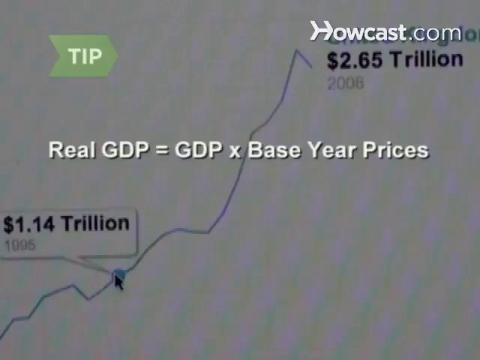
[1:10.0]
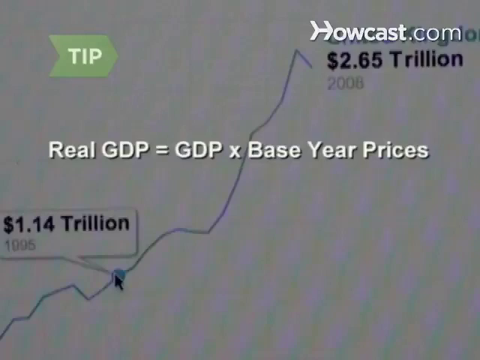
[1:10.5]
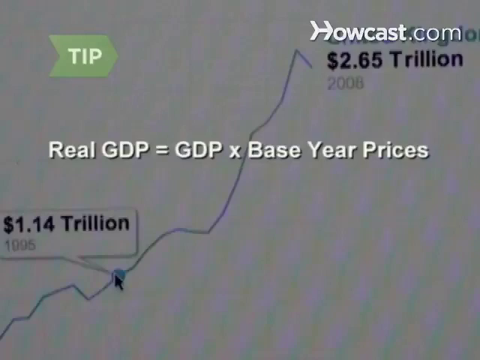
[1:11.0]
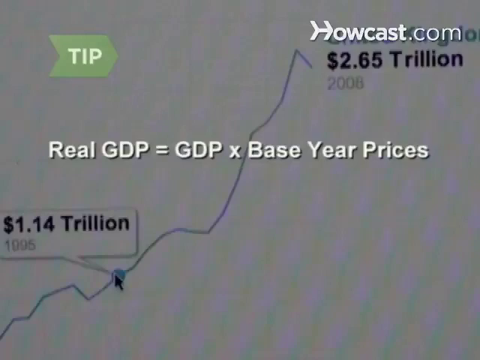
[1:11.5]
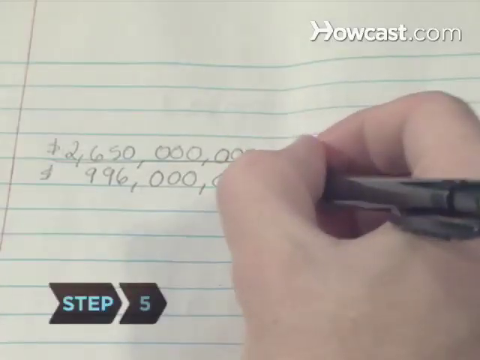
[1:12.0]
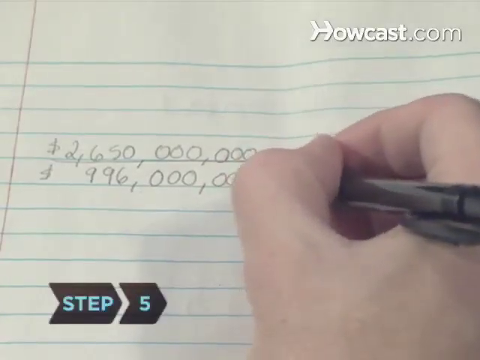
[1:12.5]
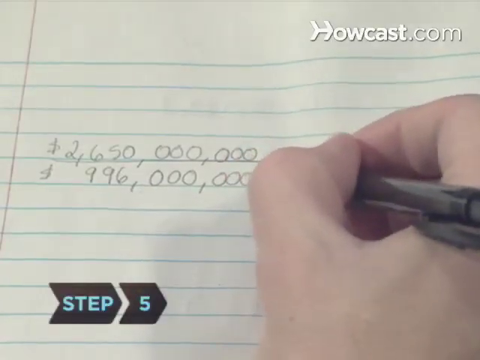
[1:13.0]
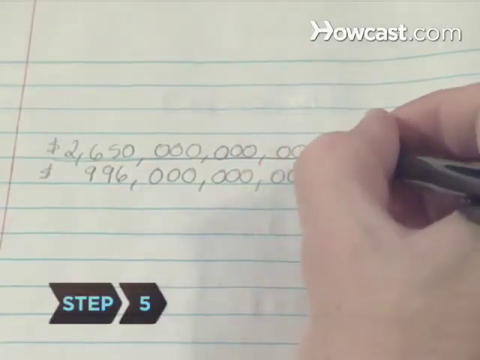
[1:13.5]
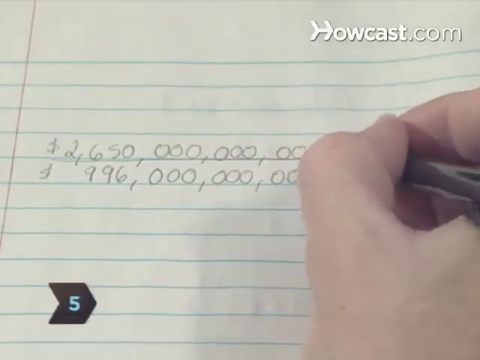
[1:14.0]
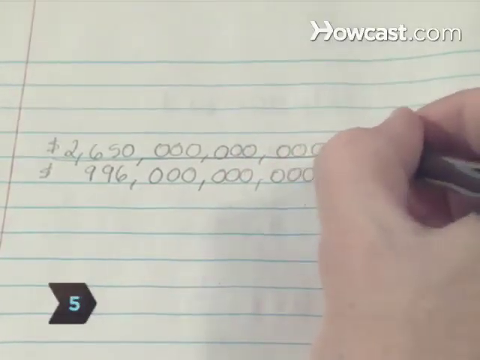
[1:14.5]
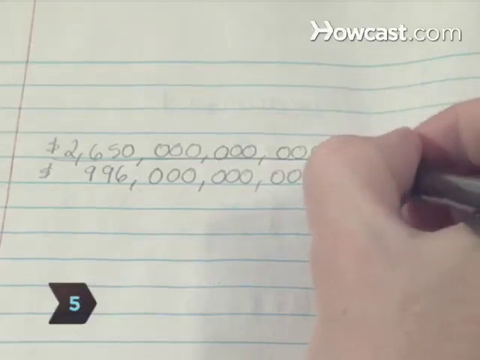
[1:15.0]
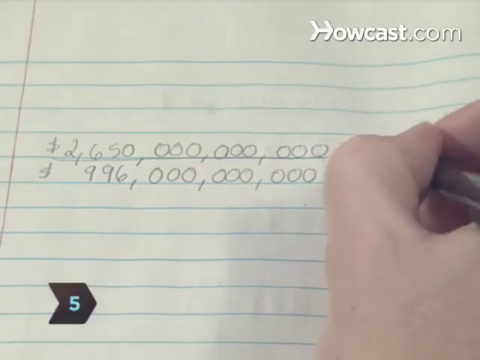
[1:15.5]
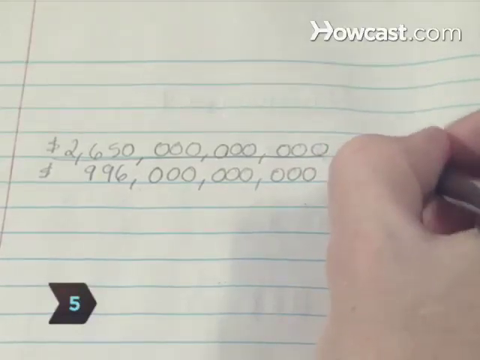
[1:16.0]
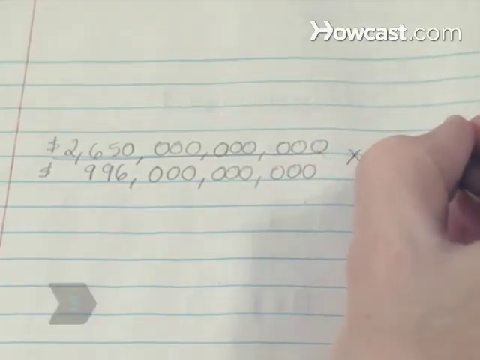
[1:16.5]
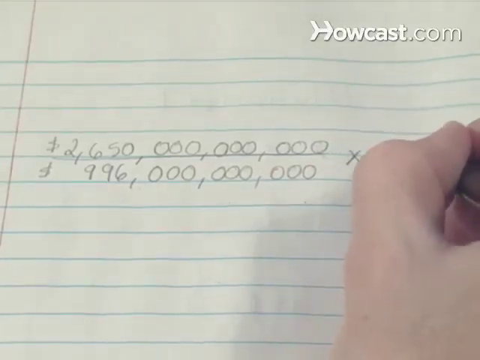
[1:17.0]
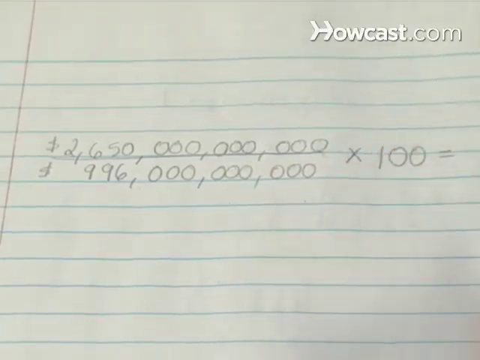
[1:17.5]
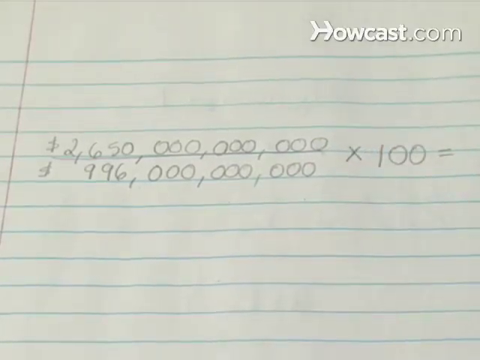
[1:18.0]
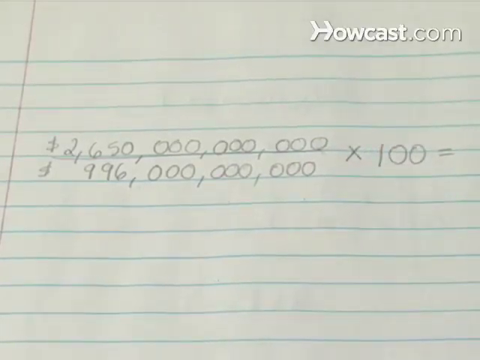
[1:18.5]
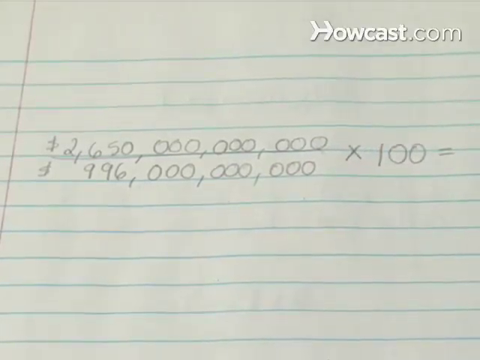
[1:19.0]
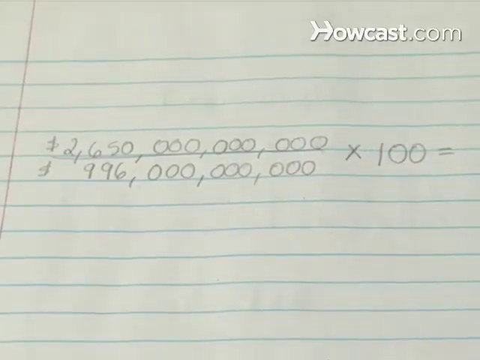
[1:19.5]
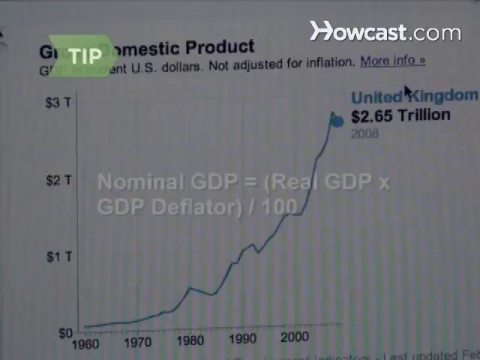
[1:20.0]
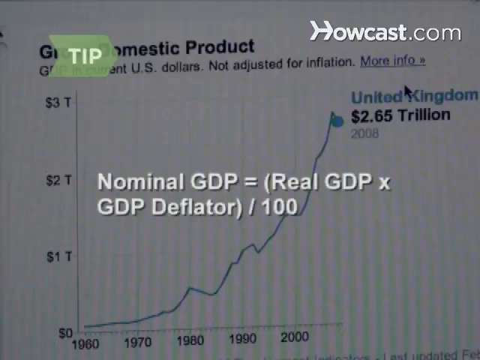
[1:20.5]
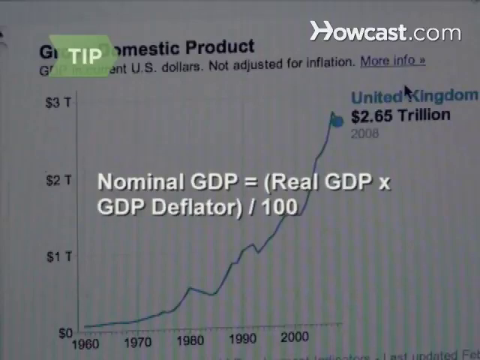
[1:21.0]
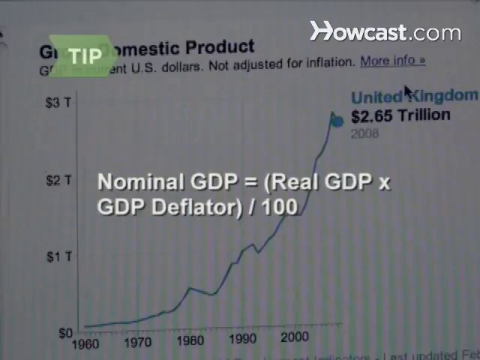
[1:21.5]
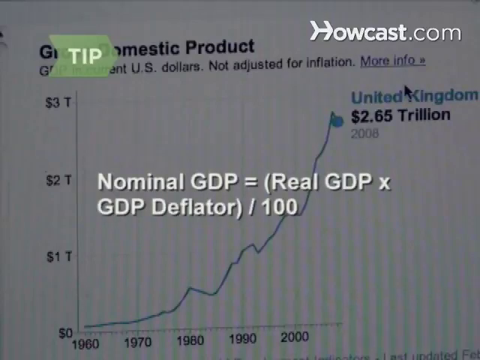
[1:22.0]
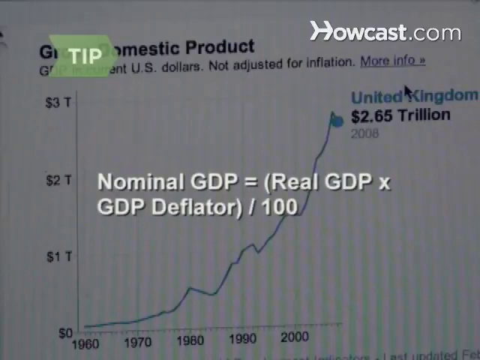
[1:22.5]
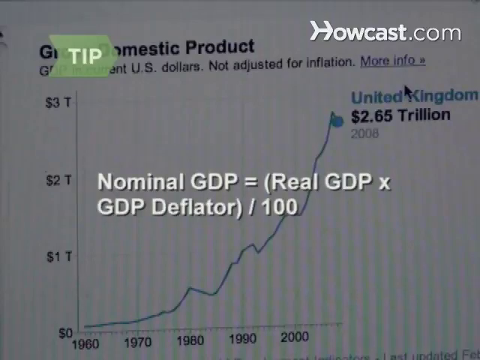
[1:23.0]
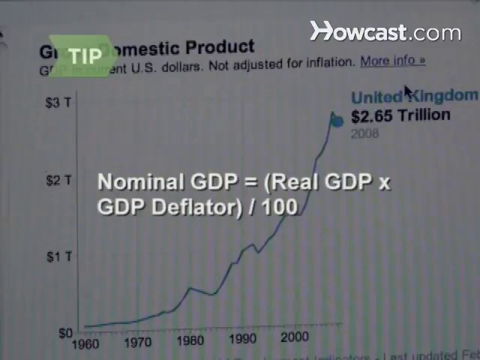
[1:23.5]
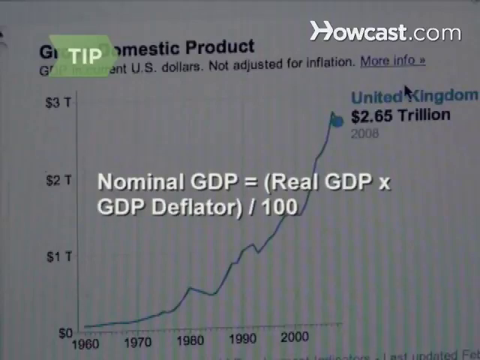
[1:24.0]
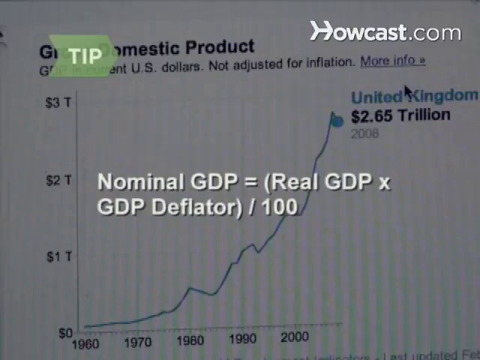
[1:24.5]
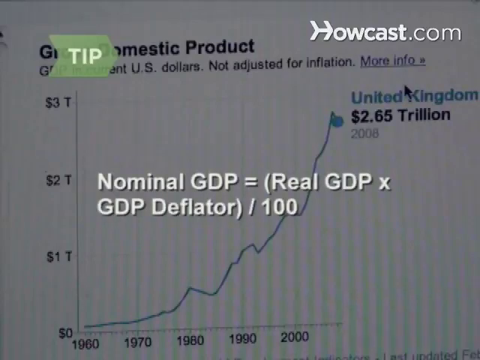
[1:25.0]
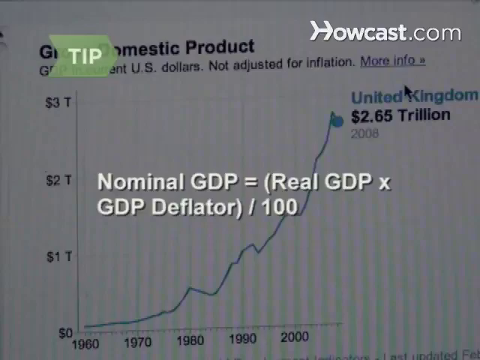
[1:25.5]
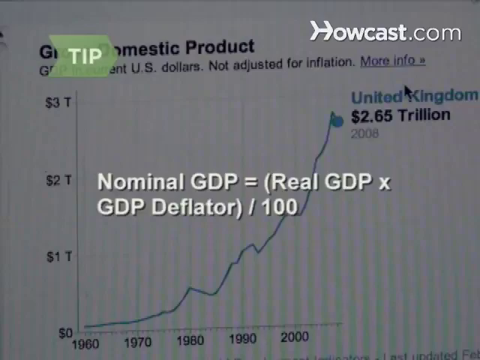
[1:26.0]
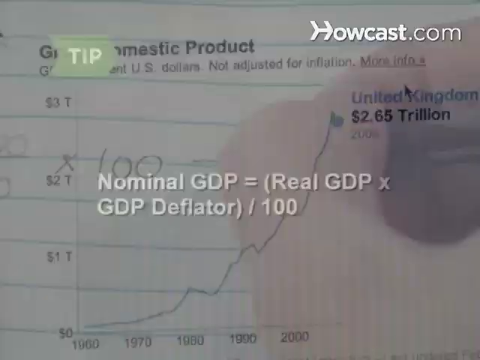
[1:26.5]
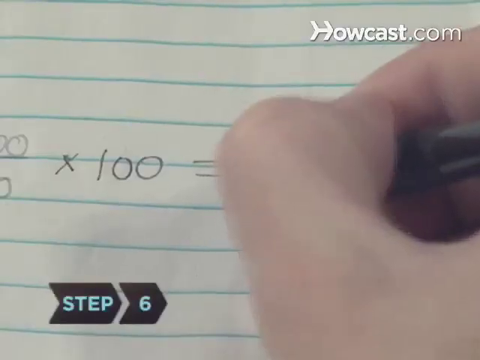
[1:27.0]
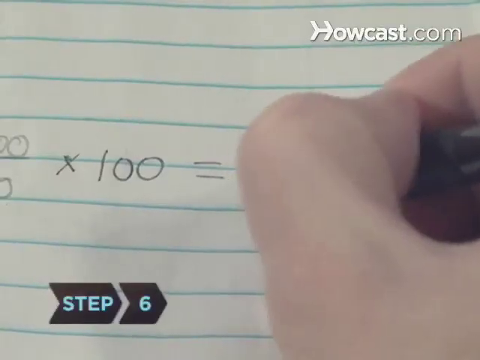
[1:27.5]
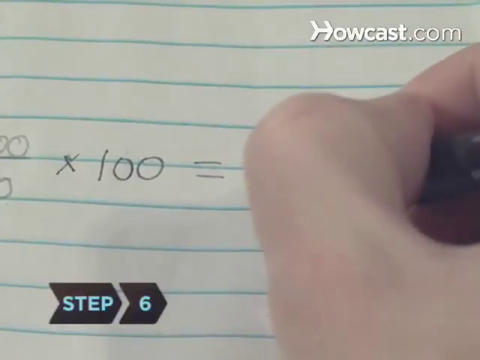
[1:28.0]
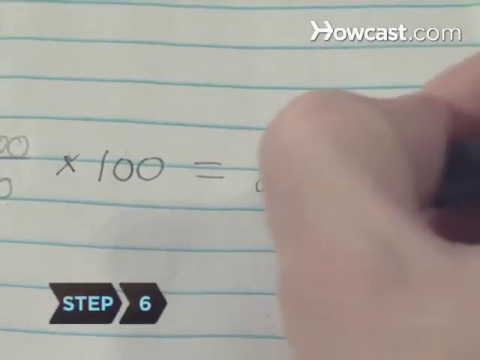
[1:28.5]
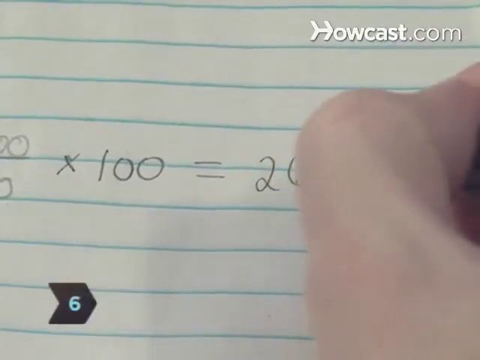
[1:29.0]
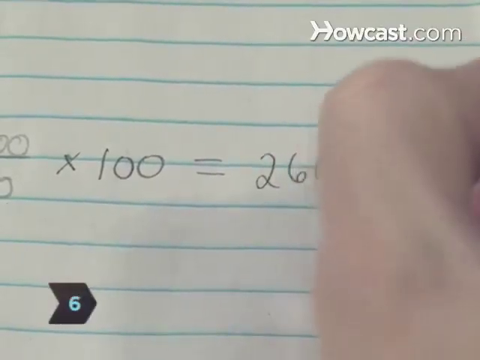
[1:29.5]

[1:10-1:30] The video cuts back to the close-up of someone's hand holding a pencil and writing large numbers on a sheet of lined paper, with a caption on an arrow at the bottom reading "Step 5". It then cuts back to a wide shot of the computer screen showing the whole line graph, with a green arrow bearing the word "tip" over the top and a caption in the middle of the screen reading "nominal GDP equals real GDP times GDP deflator / 100". Next is an extreme close-up of the person writing numbers on the ruled paper, with a caption at the bottom indicating step six, as they write an answer to the equation.